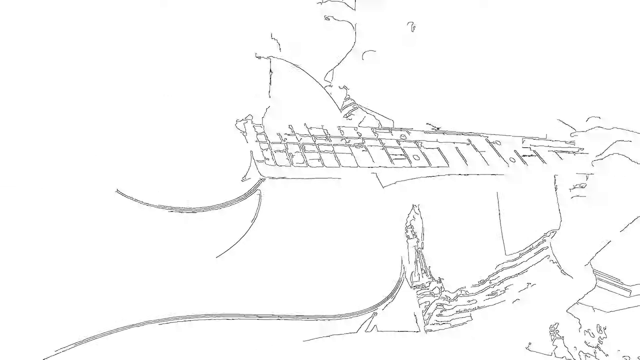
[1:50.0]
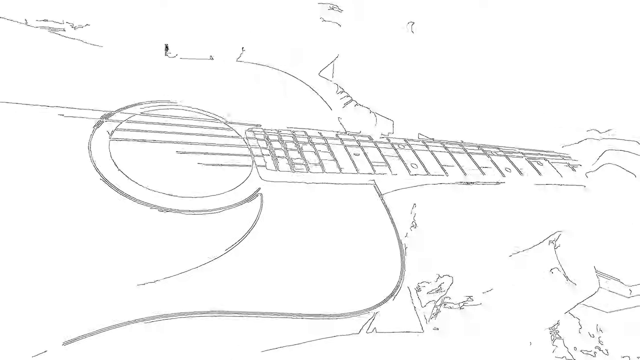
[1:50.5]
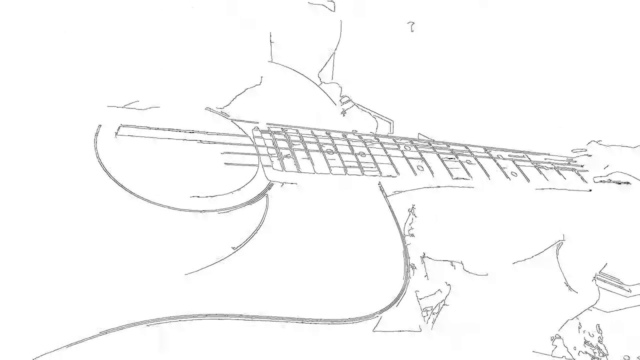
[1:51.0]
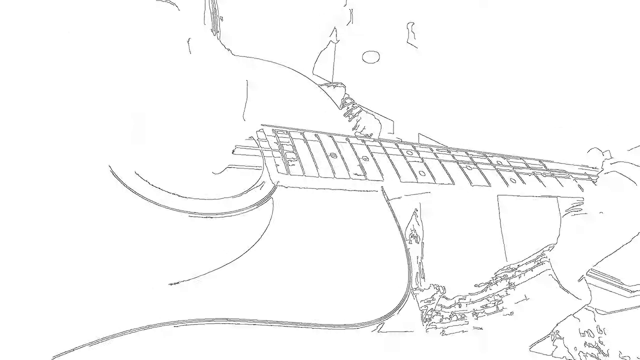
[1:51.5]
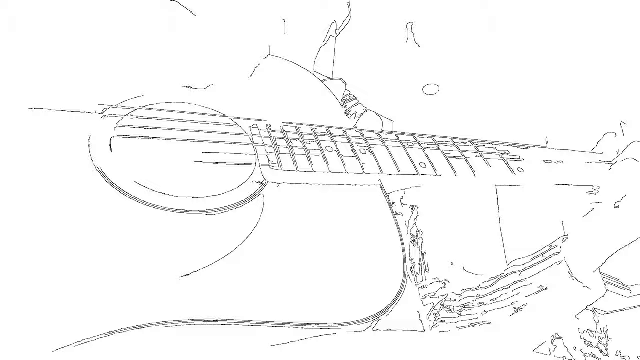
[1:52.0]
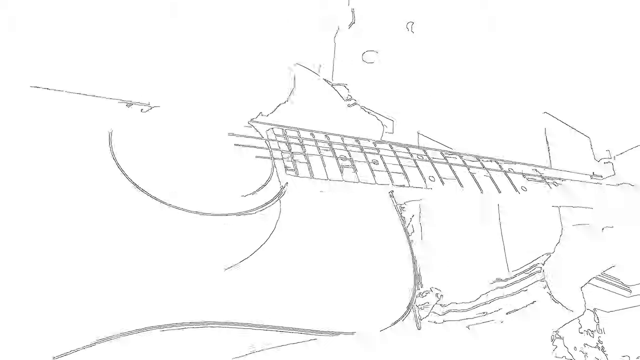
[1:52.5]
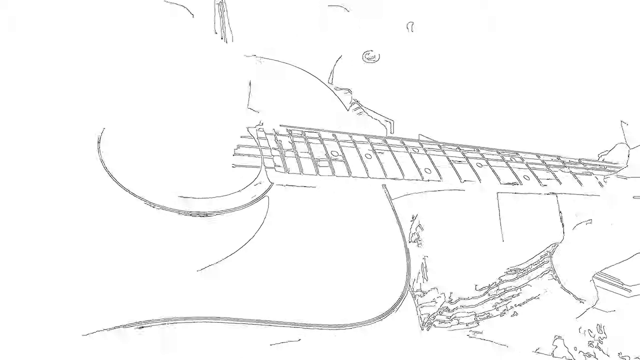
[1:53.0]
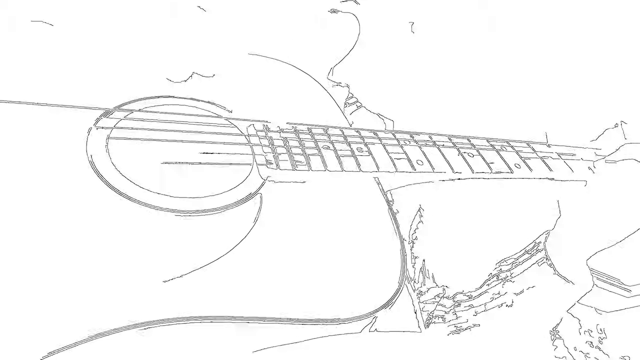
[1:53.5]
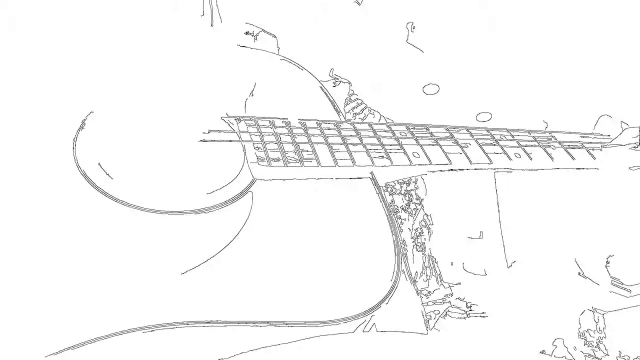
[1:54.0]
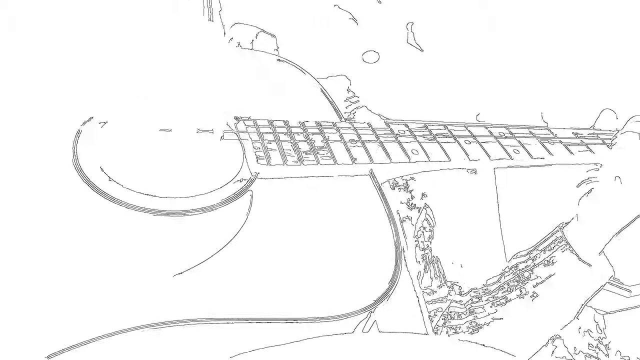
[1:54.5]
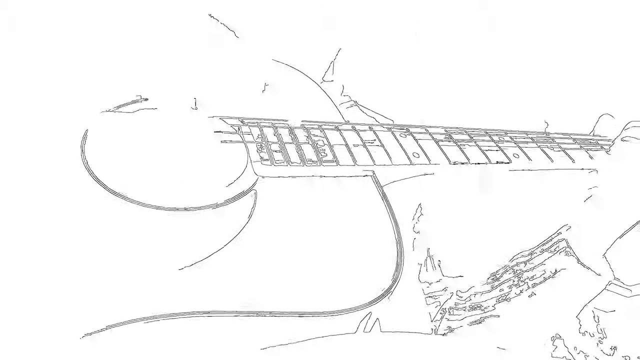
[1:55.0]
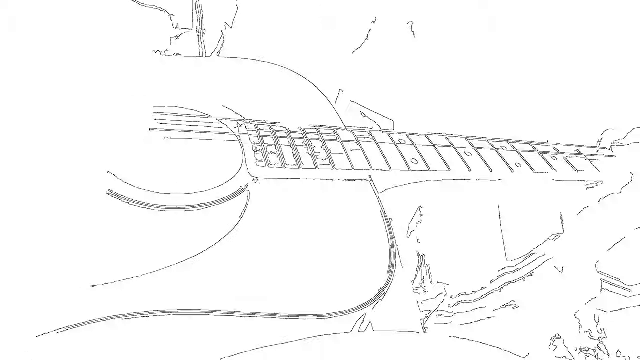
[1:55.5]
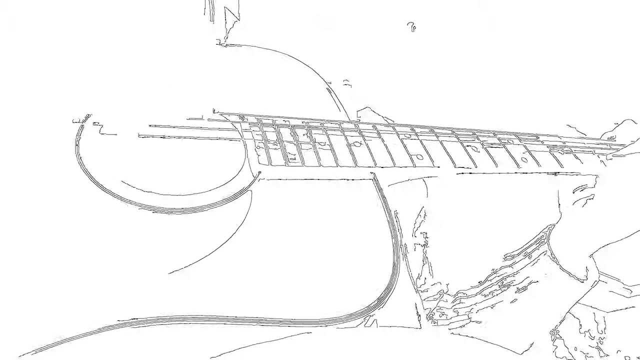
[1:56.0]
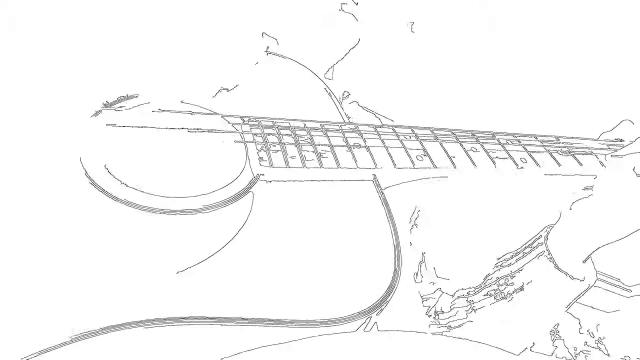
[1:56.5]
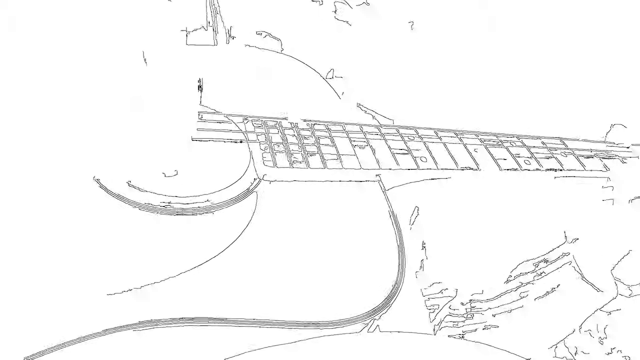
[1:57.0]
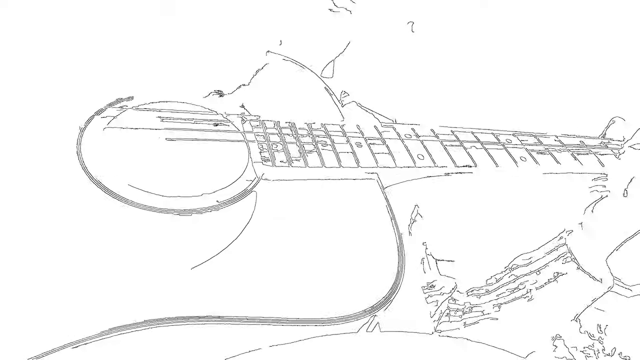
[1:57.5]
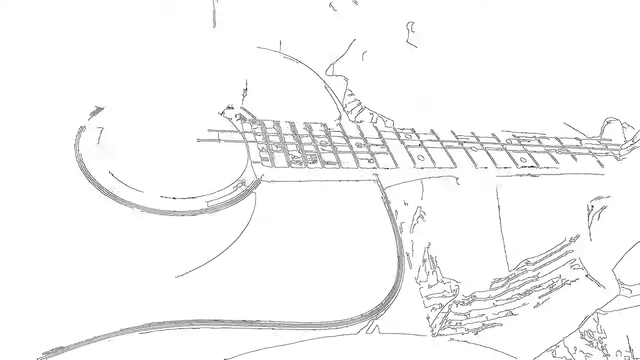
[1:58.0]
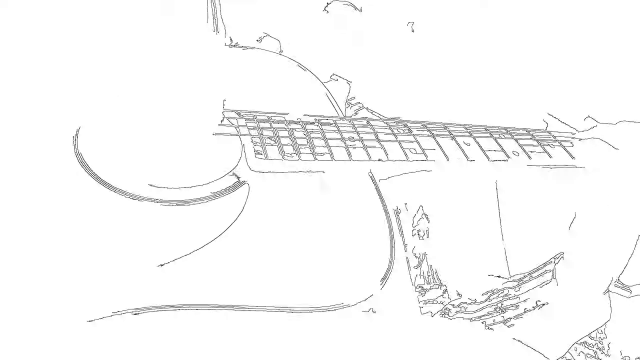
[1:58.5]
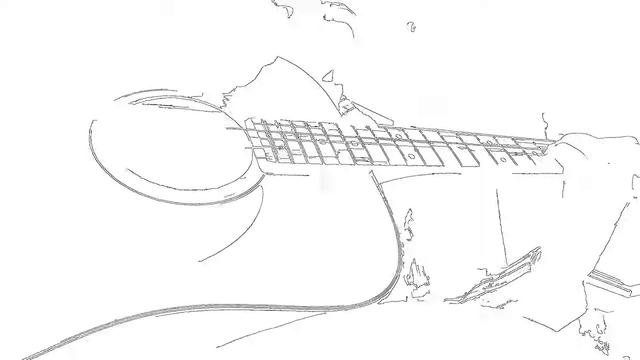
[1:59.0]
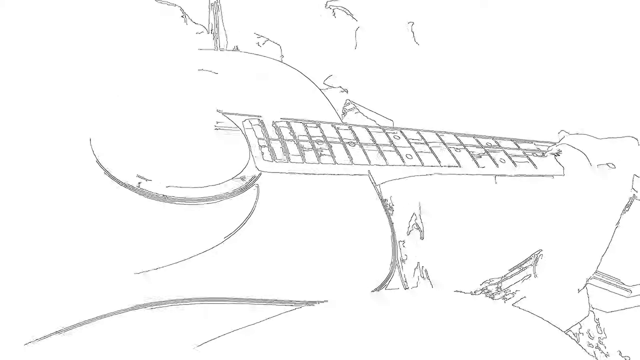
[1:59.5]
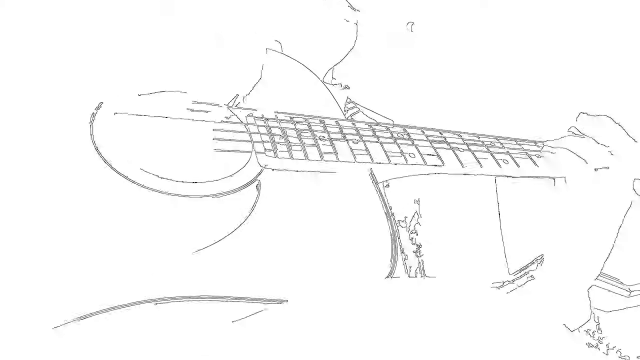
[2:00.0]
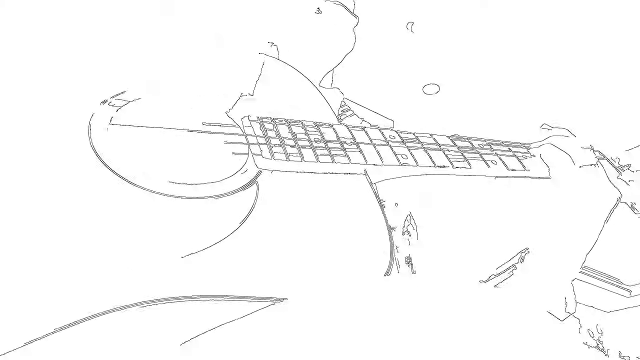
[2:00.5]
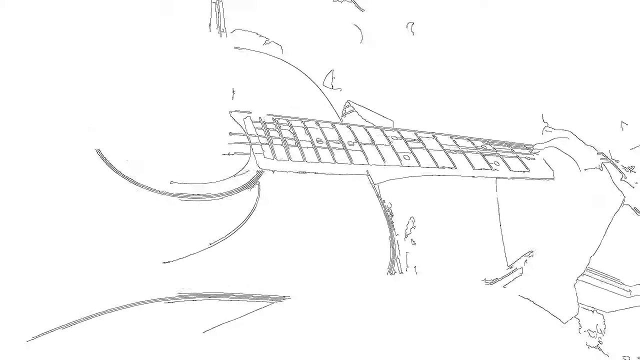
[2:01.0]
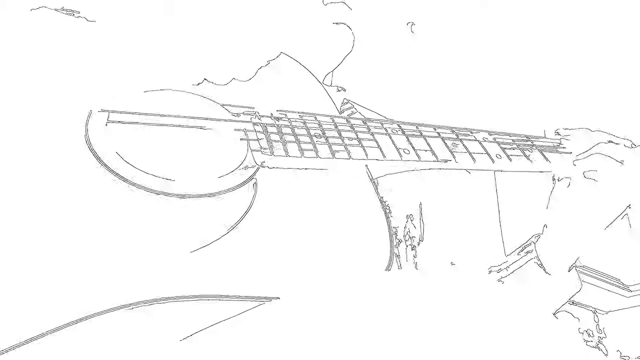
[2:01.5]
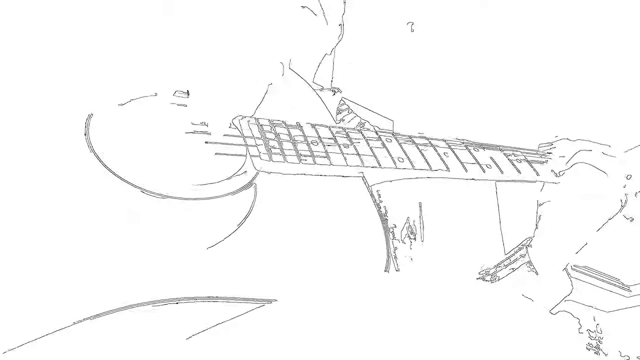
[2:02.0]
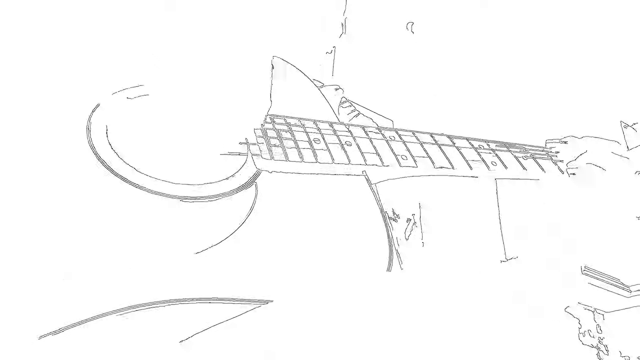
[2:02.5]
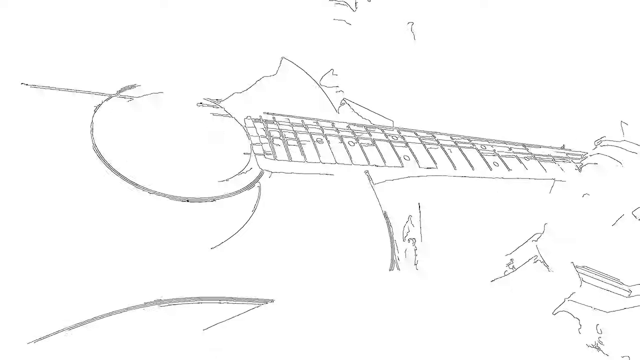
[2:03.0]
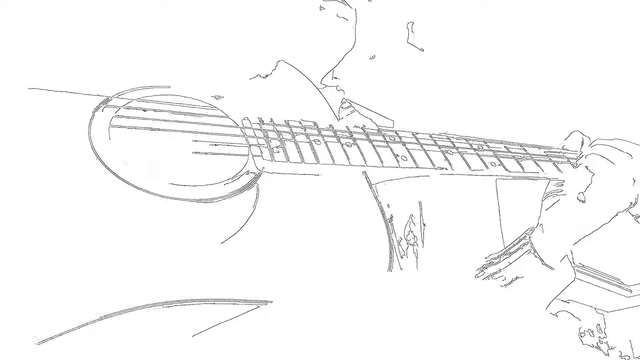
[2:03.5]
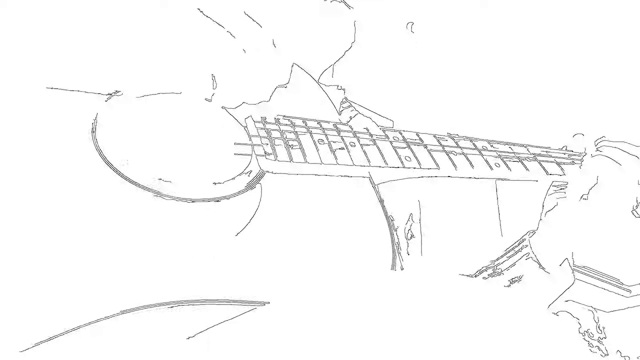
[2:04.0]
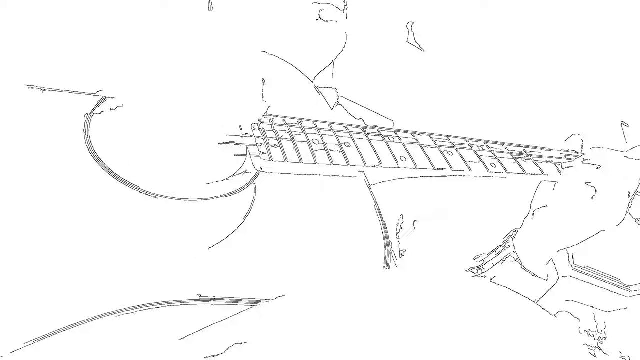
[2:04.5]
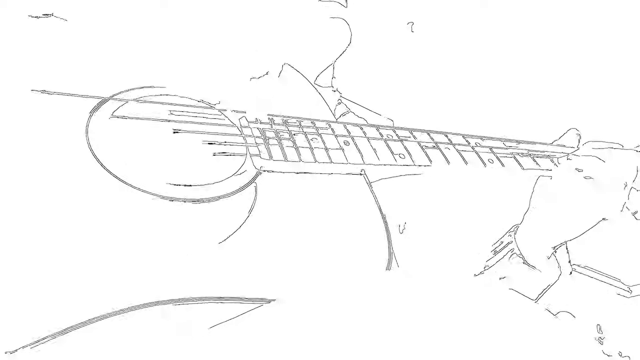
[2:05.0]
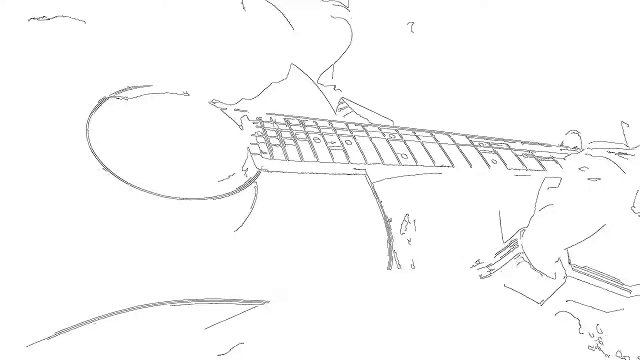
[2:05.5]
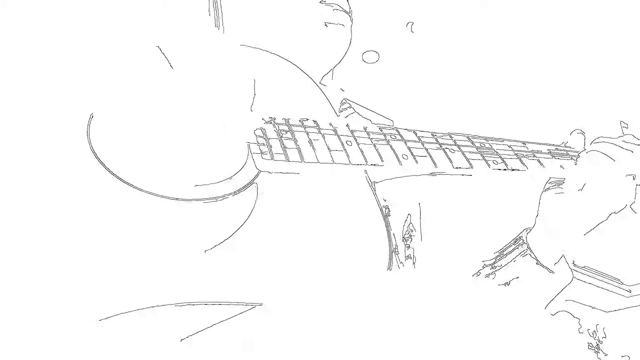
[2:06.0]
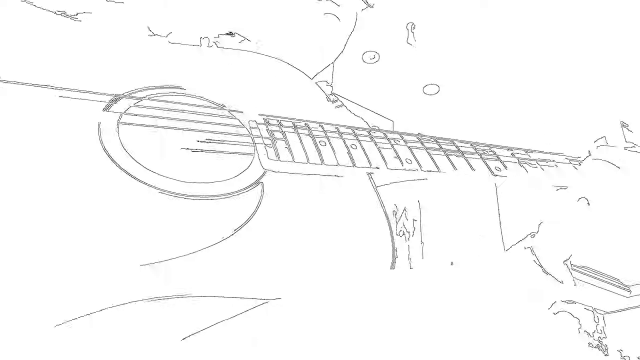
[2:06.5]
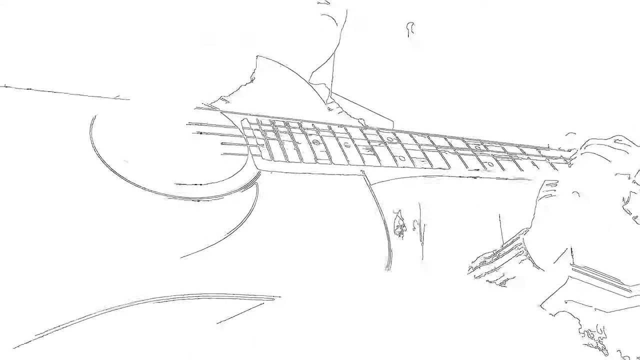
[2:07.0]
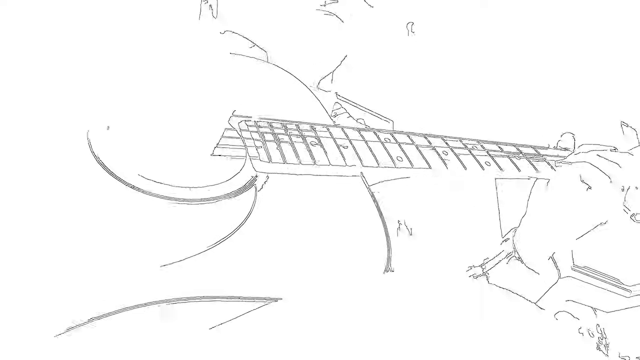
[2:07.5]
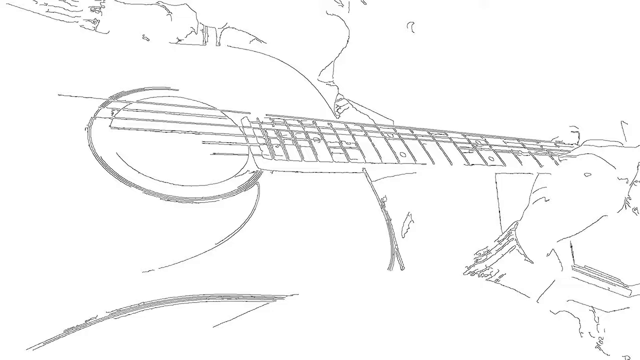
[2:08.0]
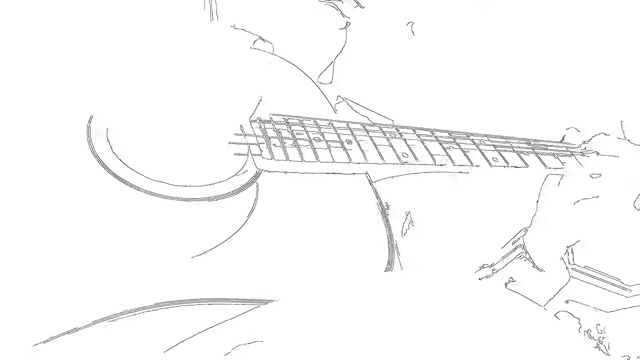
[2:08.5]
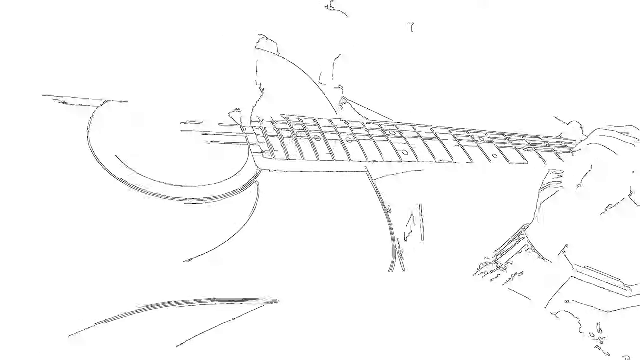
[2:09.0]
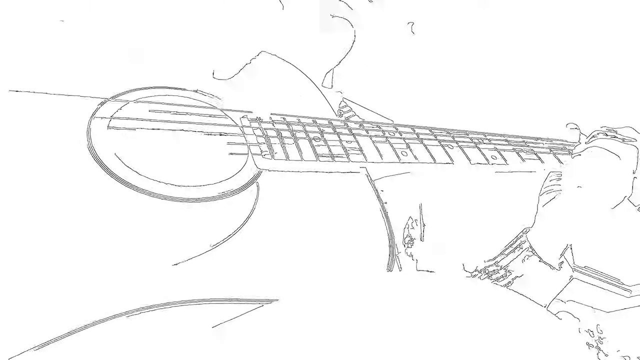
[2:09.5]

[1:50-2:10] The man leans forward a bit, bringing more of the guitar strings and the guitar into view rather than his body. More of his right shoulder is visible, along with the cuff of his ribbed sweater and more of his collar and neck. His legs are crossed at the knee, which comes into the bottom of the frame because the camera is at his knee level, as though he sits on a stool with the camera possibly on a counter. Behind him the window is still visible, though nothing outside it can be made out because of the filter, which makes the video look like a black-and-white illustration in the style of popular 80s music videos. The room is recognizable as a kitchen: there is a cutout with recessed lighting where there are two large windows, cabinets overhead, and above the cabinets a box that looks like it may be for an appliance or some other kitchen item being stored. The reflection of his hand is occasionally visible in a vinyl or plastic panel on the front of the wooden guitar.